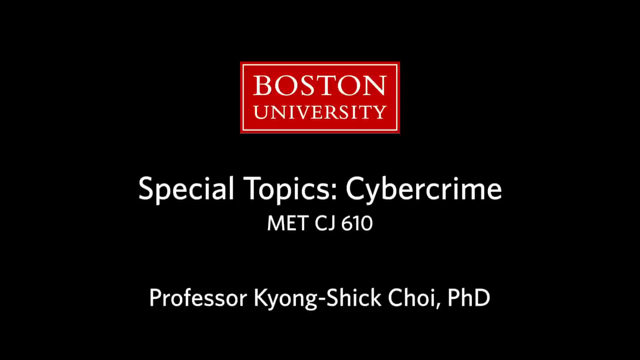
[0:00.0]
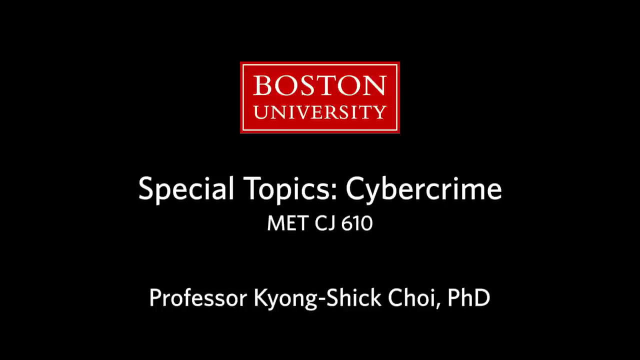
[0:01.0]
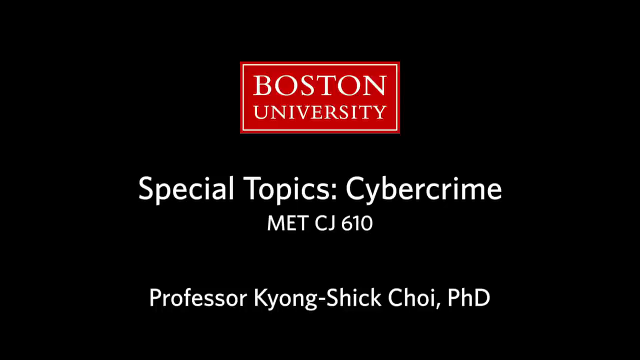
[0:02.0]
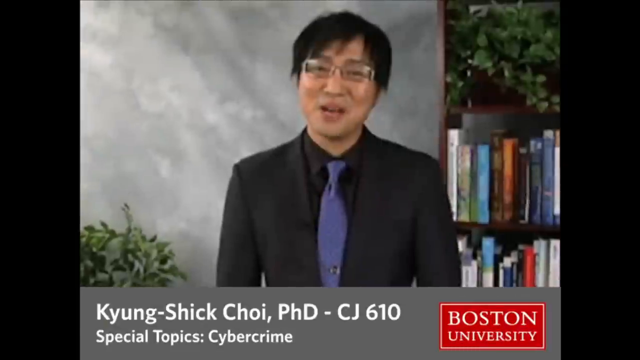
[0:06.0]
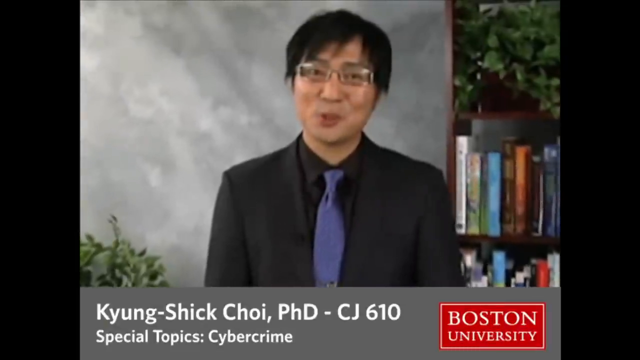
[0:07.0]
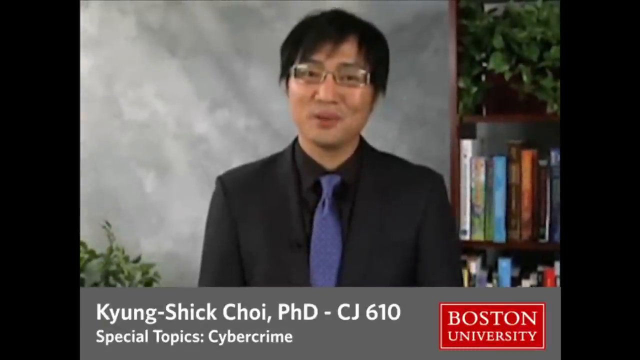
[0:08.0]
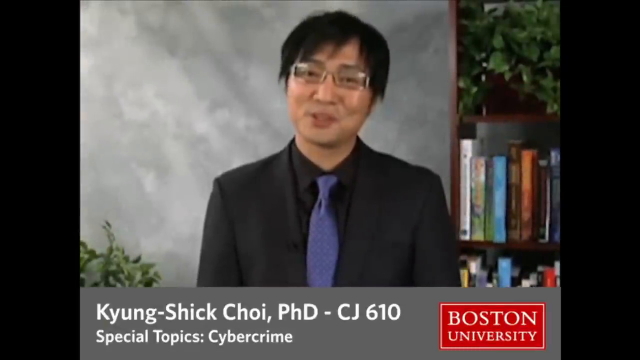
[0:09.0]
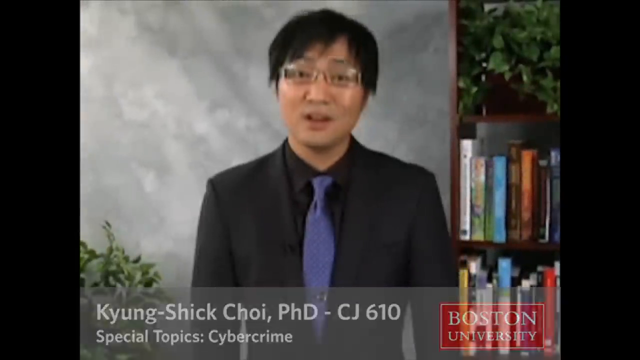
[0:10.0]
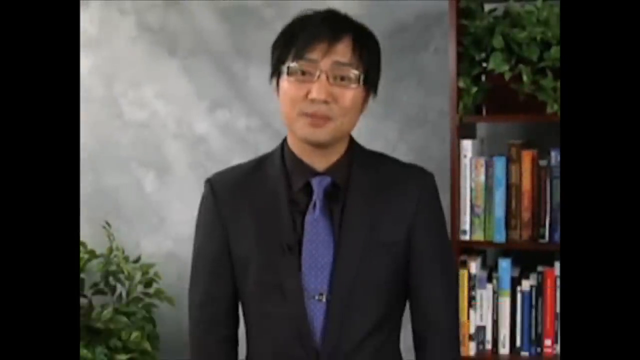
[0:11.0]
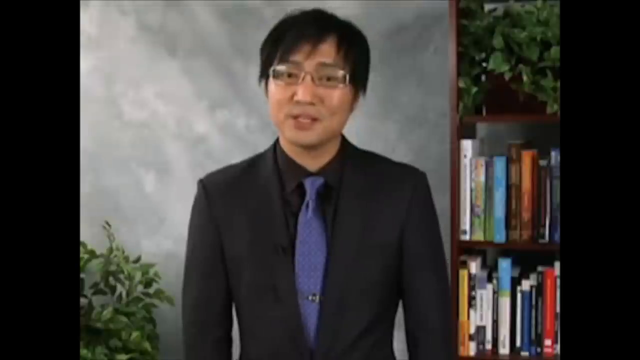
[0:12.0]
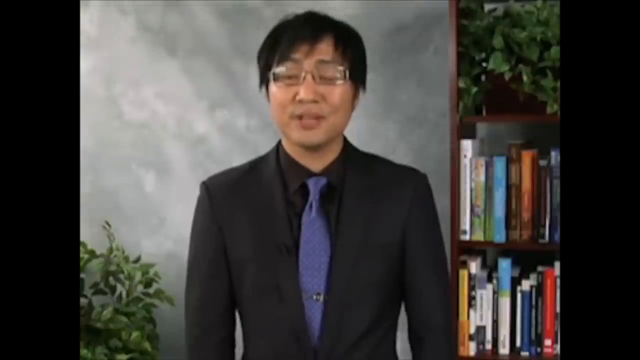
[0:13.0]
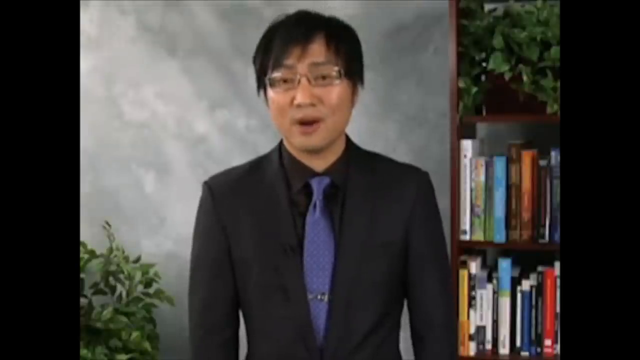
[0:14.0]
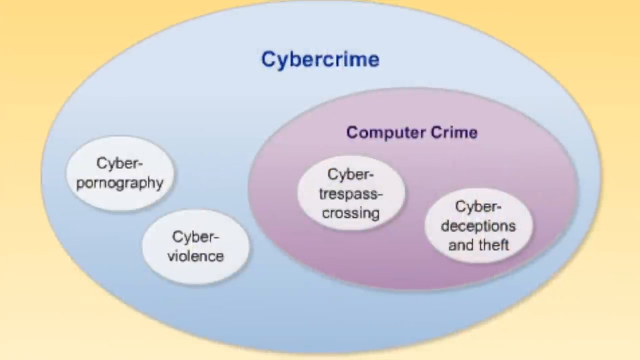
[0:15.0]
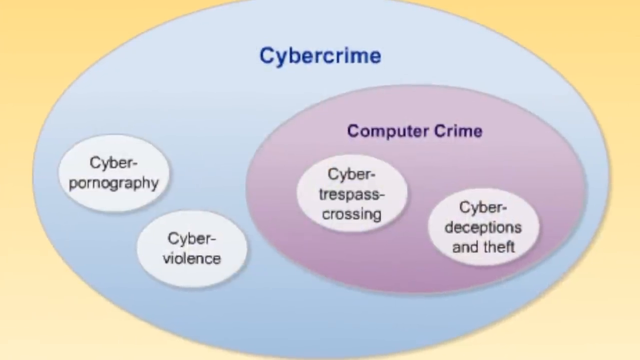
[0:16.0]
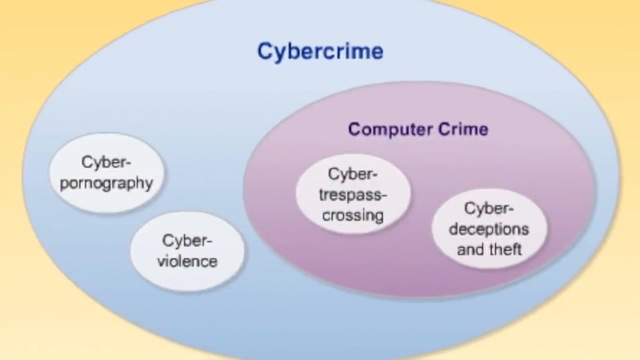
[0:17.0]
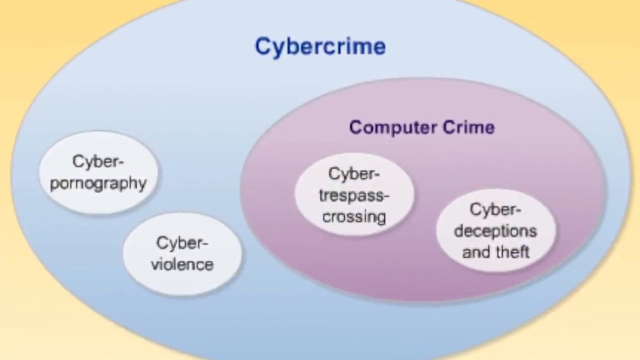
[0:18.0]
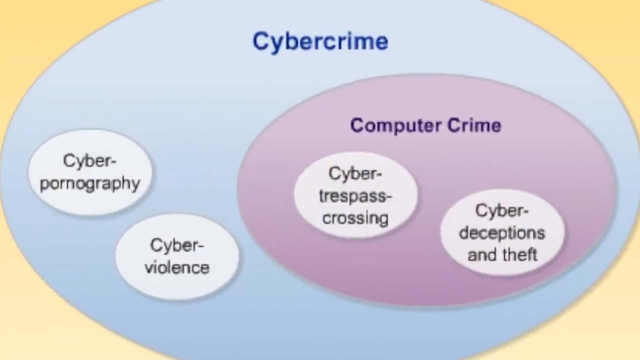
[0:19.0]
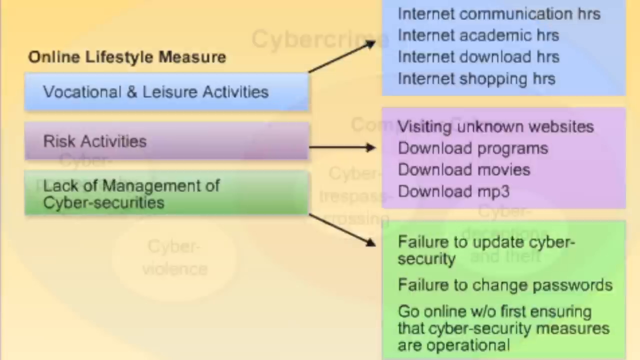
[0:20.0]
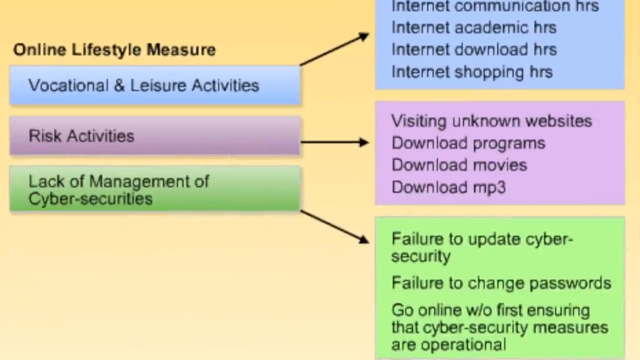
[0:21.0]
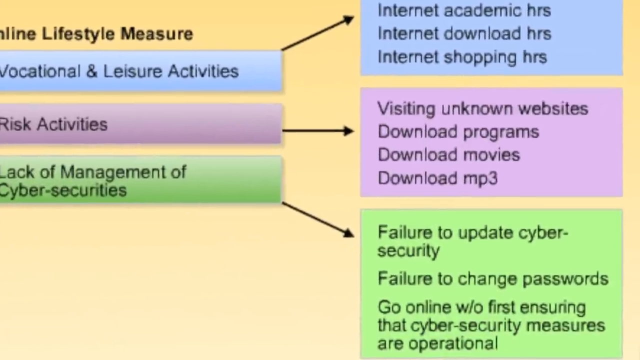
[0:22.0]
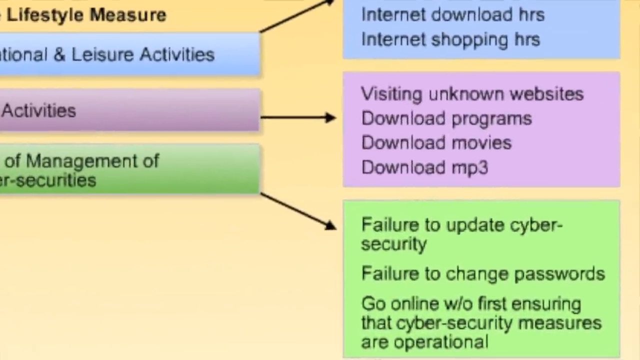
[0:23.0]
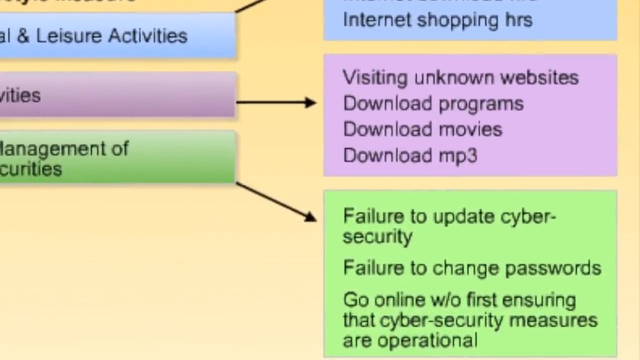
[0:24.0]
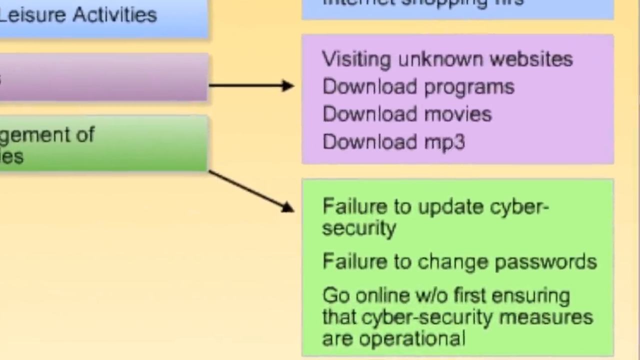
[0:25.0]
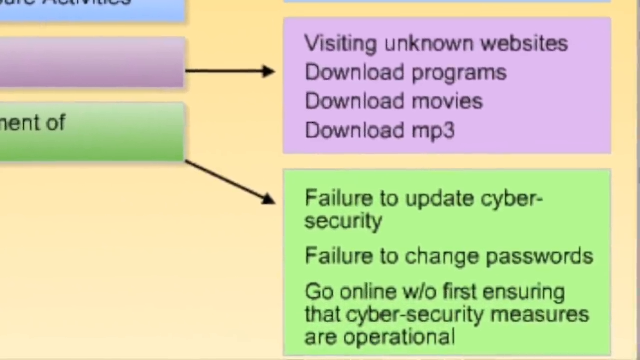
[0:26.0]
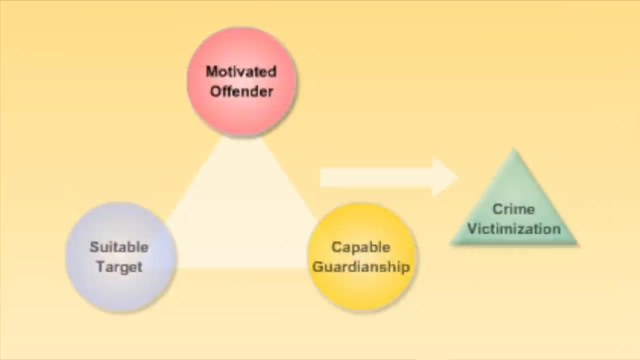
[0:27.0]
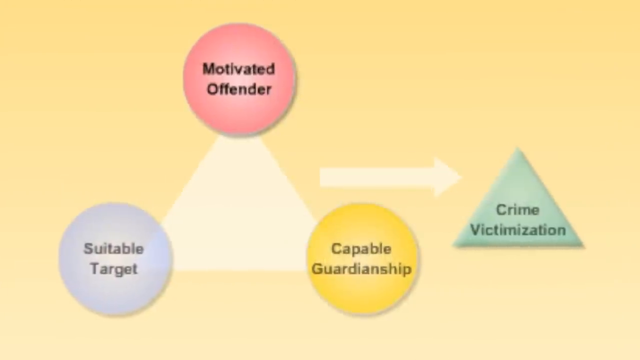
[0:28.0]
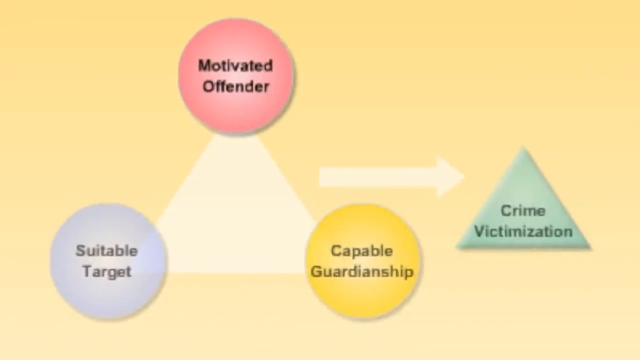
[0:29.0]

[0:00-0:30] A red banner in the center of the screen reads "Boston University" in white letters. At the bottom is written "special topics and cybercrime" and "professor Koyan Sheikh Choi PhD". A man wearing glasses, a black jacket, a black shirt and a purple tie talks while facing the camera, with books and some plants visible in the background. The picture continues to zoom in as he keeps talking to the camera. Next, a yellow background shows the words "cyber crime", "computer crime", "cyber pornography" and "cyber violence", each written in its own section, in shapes that appear to be oval.